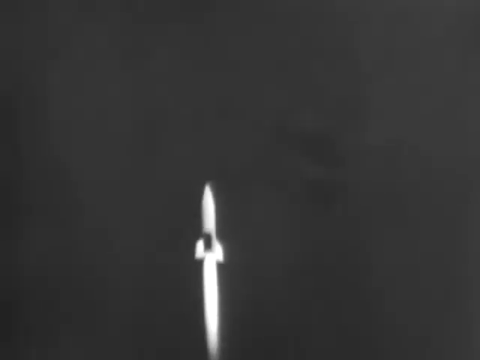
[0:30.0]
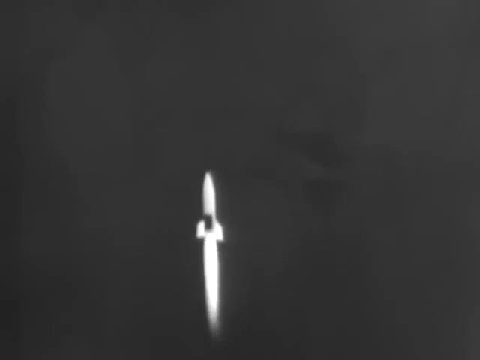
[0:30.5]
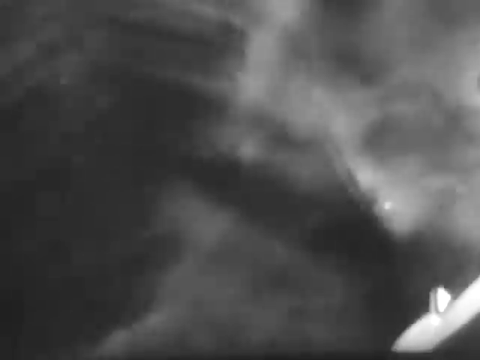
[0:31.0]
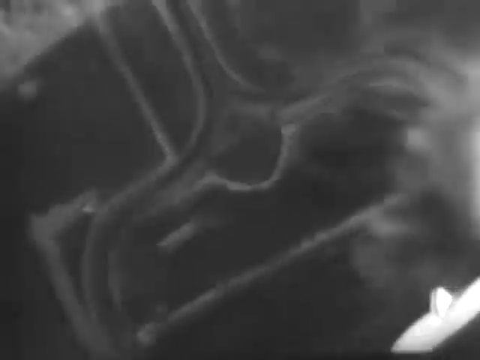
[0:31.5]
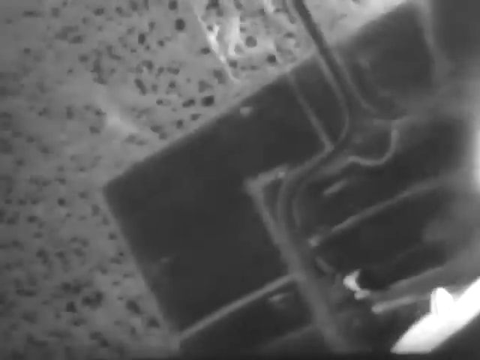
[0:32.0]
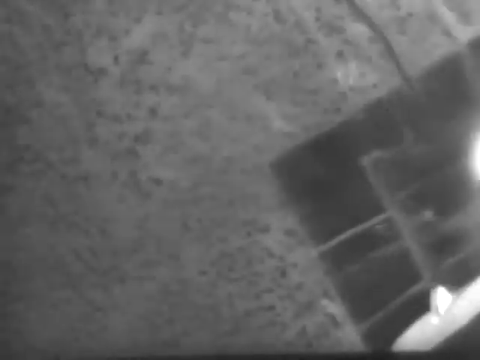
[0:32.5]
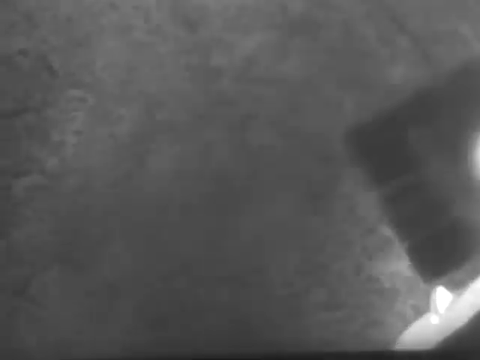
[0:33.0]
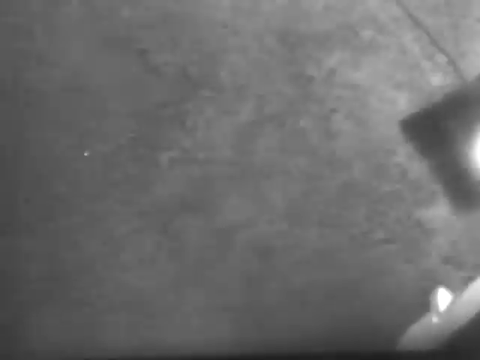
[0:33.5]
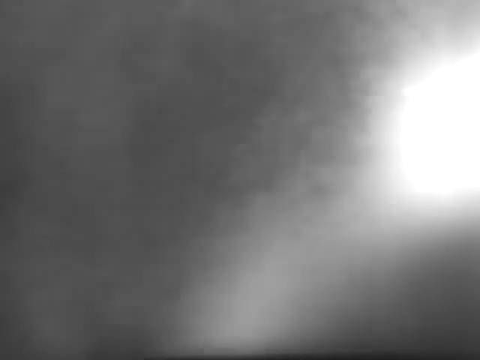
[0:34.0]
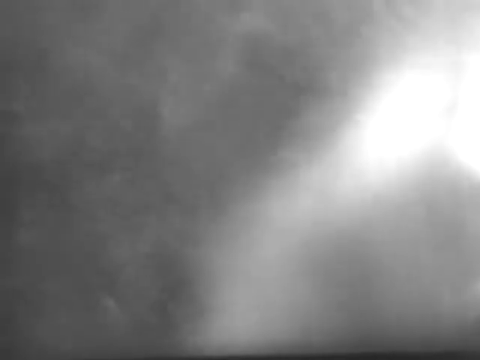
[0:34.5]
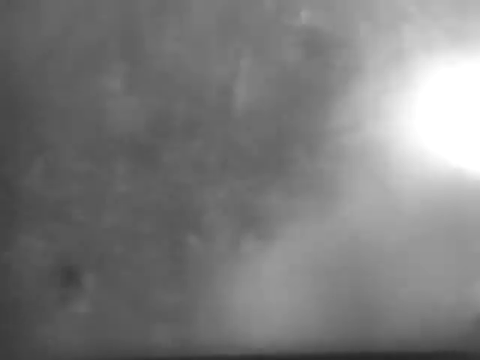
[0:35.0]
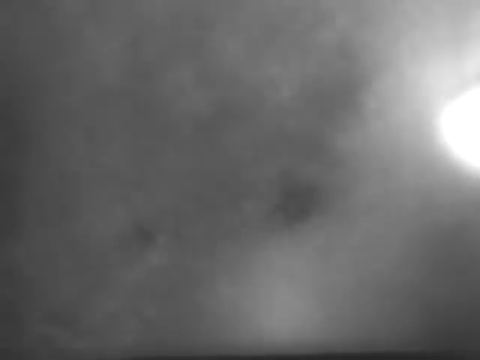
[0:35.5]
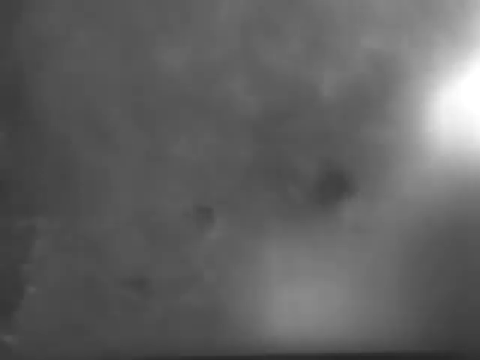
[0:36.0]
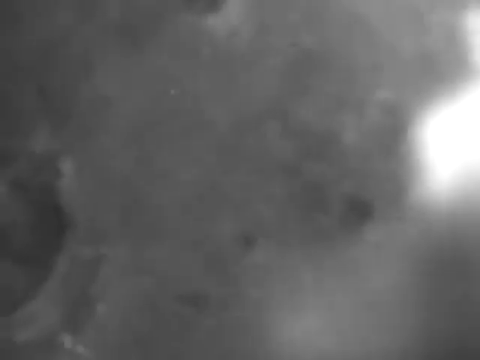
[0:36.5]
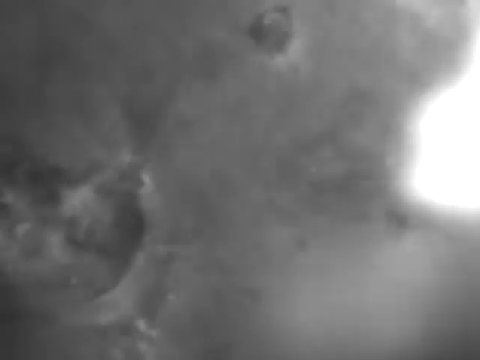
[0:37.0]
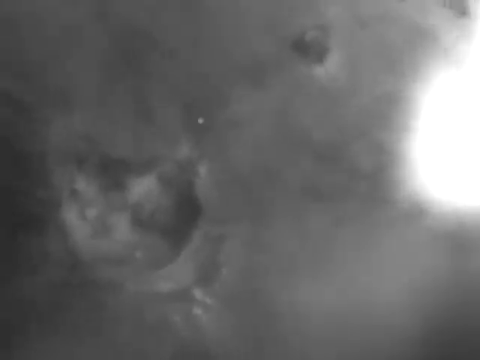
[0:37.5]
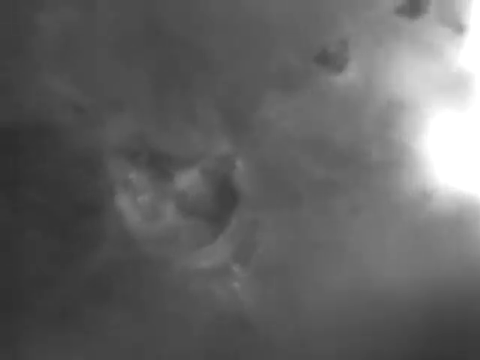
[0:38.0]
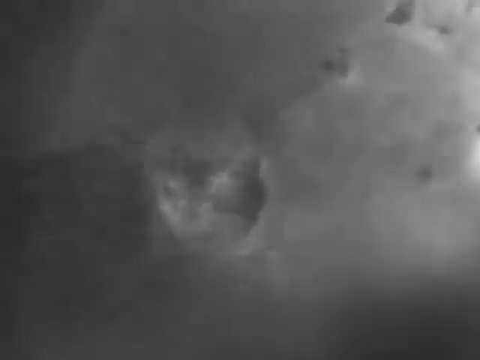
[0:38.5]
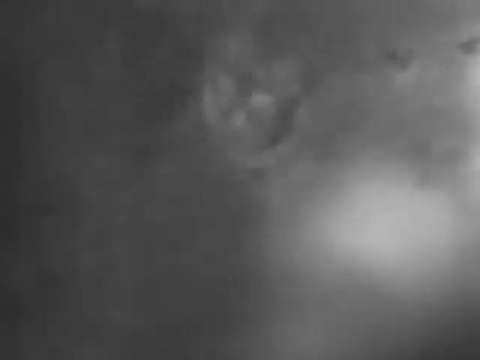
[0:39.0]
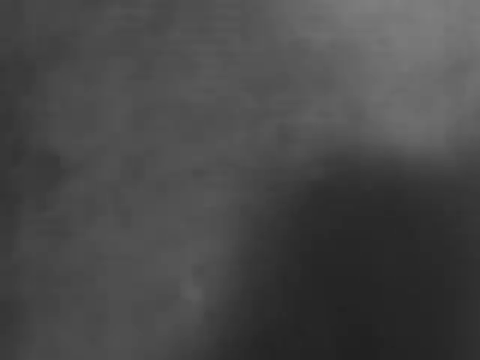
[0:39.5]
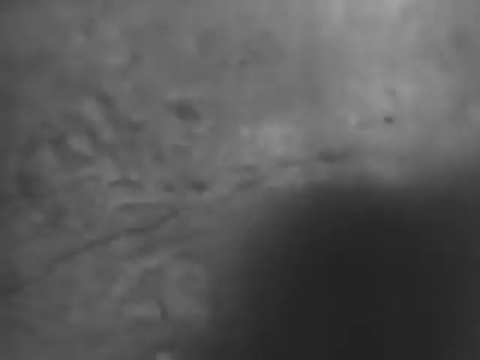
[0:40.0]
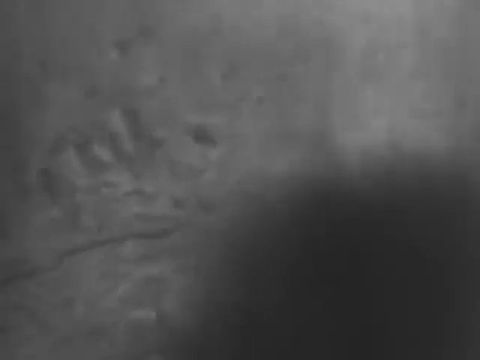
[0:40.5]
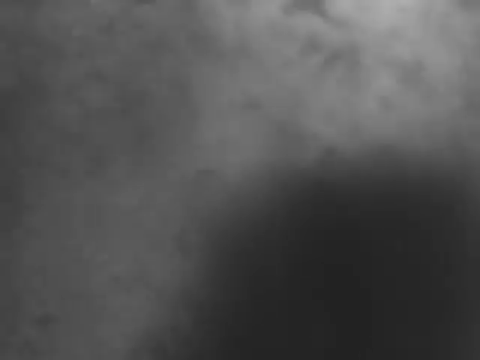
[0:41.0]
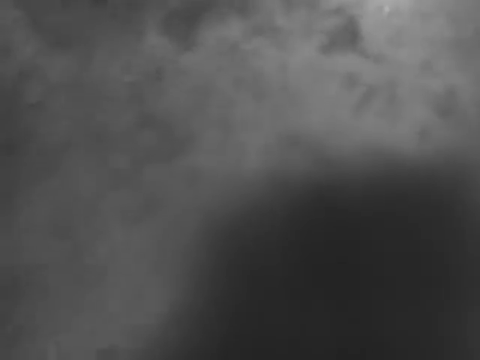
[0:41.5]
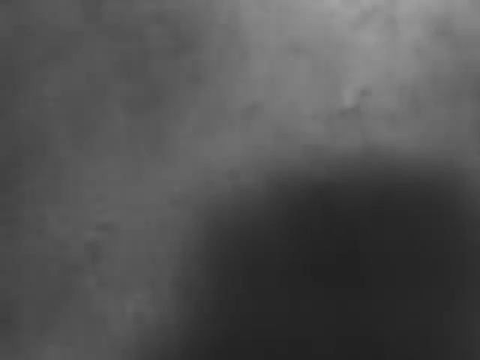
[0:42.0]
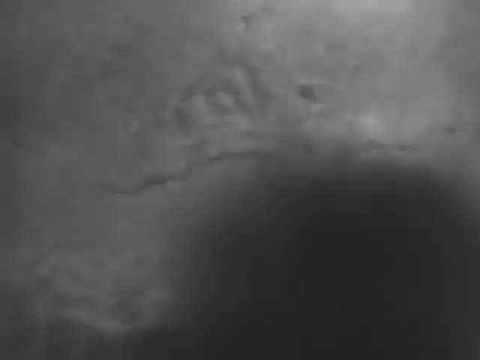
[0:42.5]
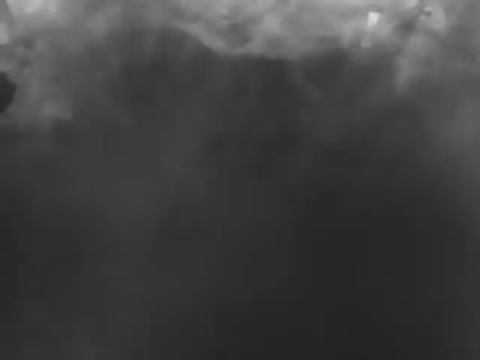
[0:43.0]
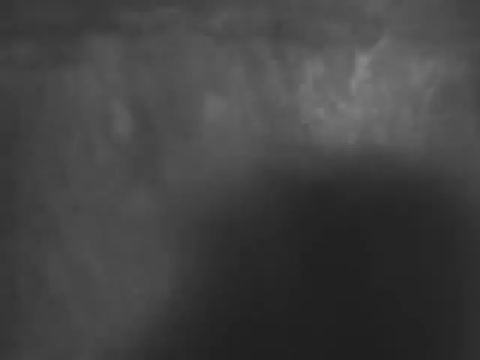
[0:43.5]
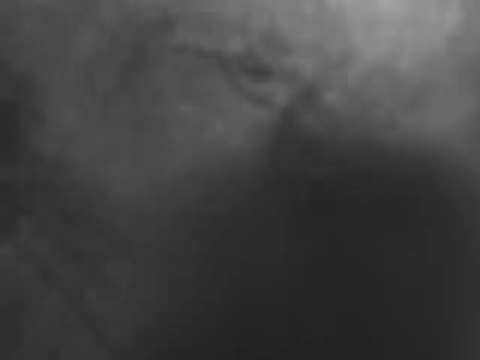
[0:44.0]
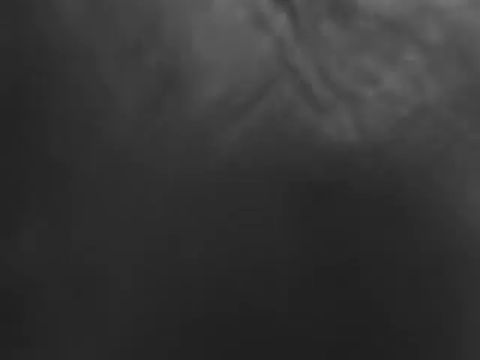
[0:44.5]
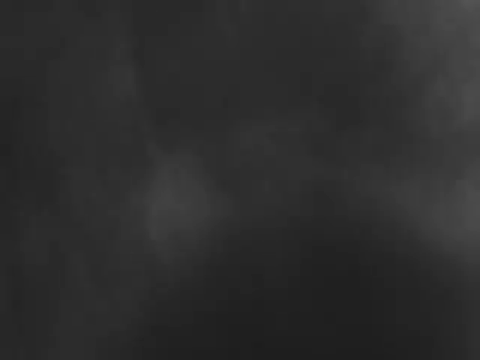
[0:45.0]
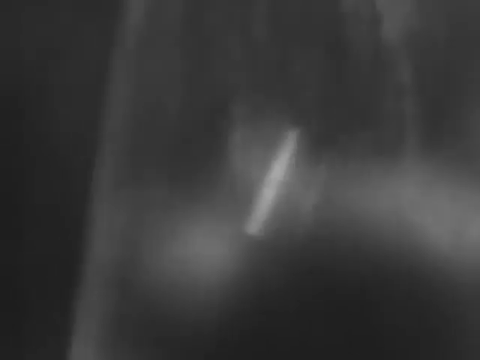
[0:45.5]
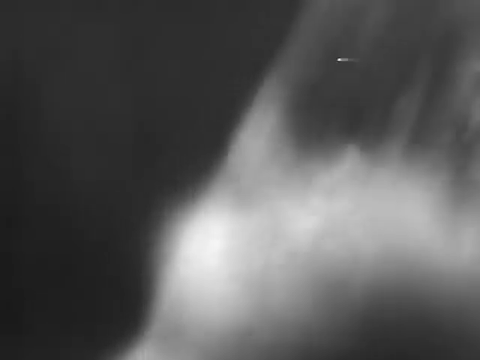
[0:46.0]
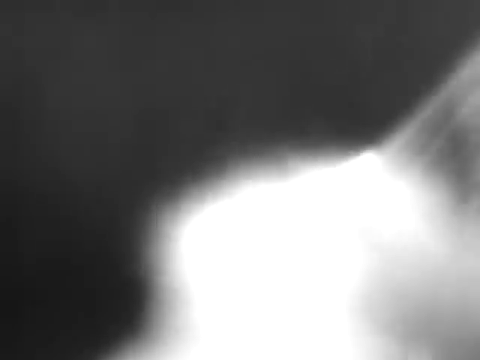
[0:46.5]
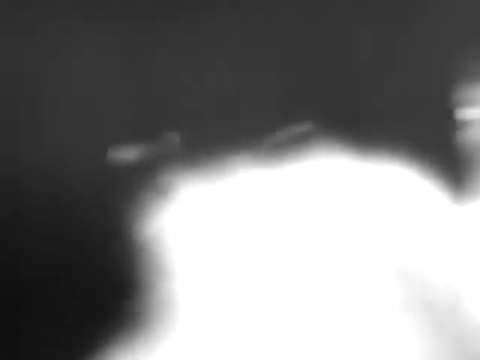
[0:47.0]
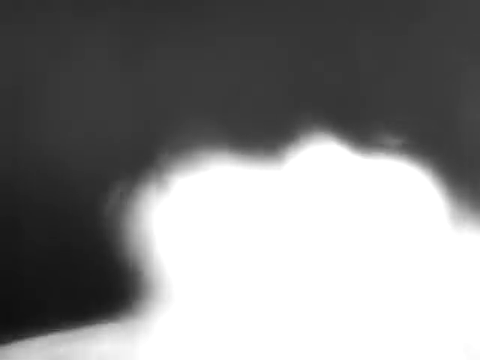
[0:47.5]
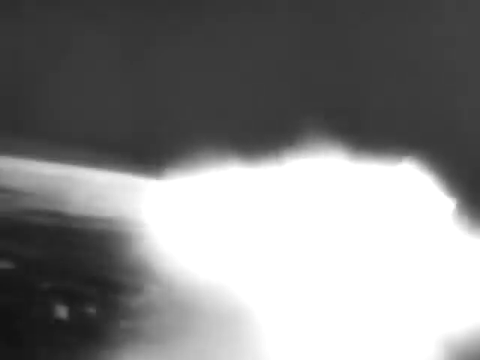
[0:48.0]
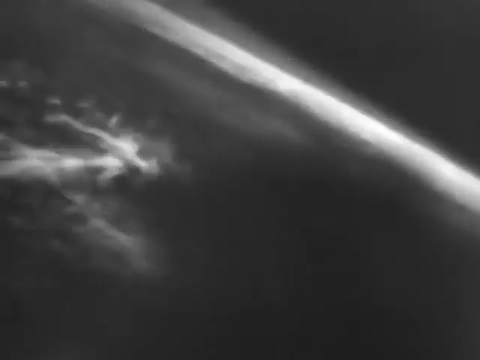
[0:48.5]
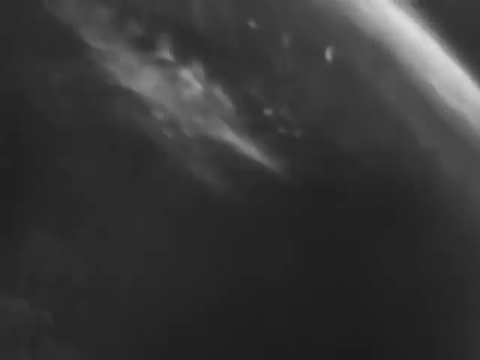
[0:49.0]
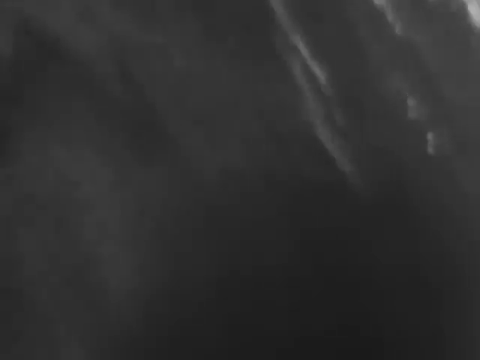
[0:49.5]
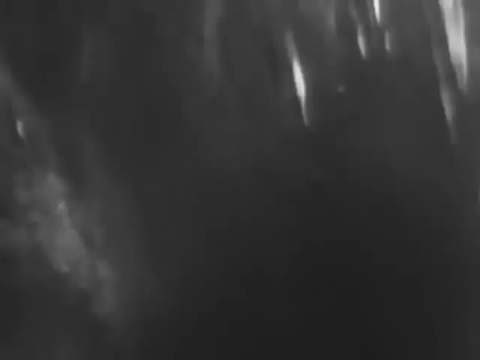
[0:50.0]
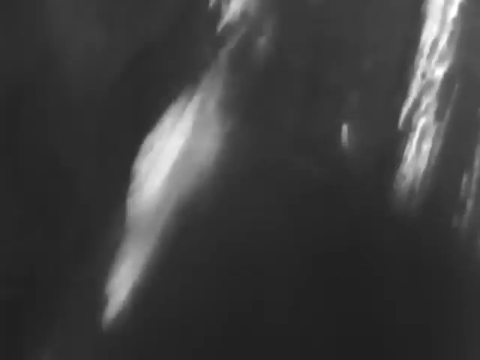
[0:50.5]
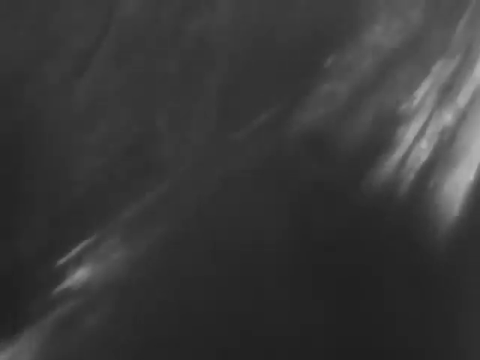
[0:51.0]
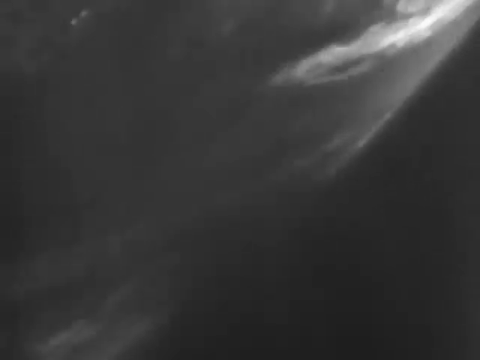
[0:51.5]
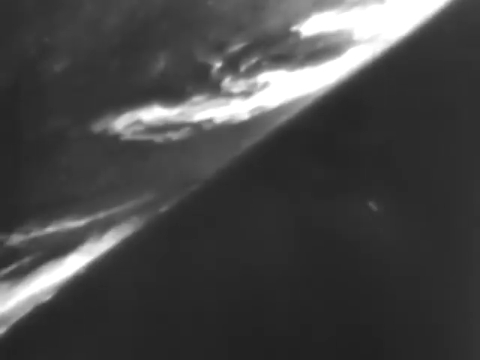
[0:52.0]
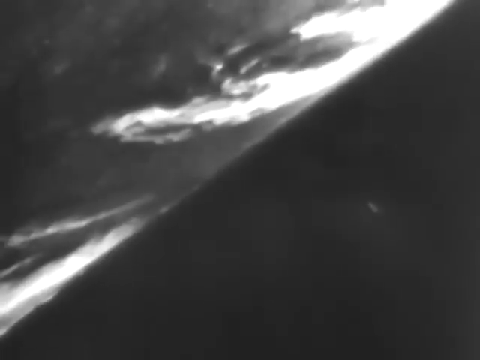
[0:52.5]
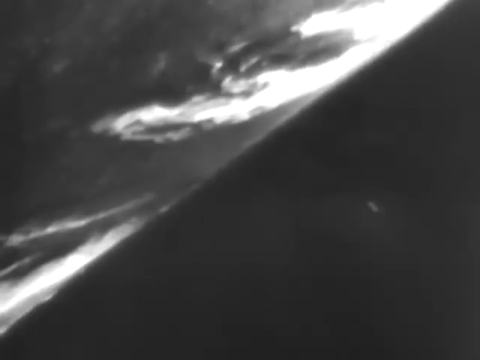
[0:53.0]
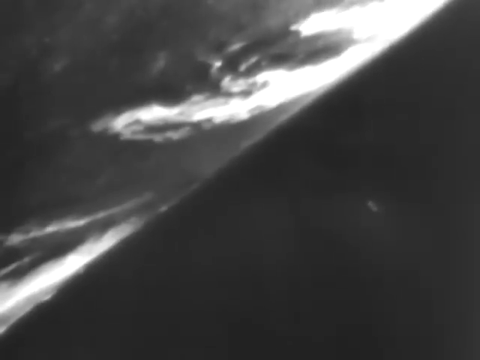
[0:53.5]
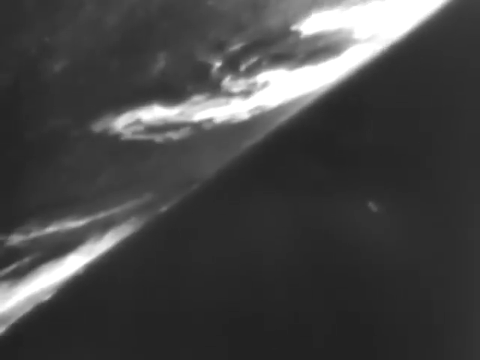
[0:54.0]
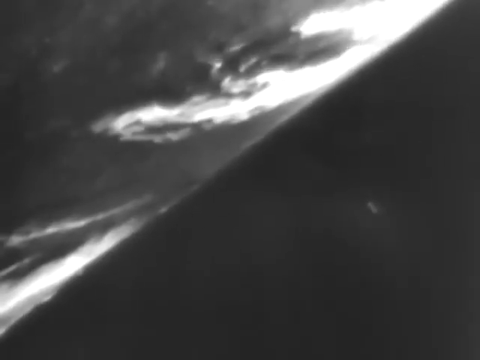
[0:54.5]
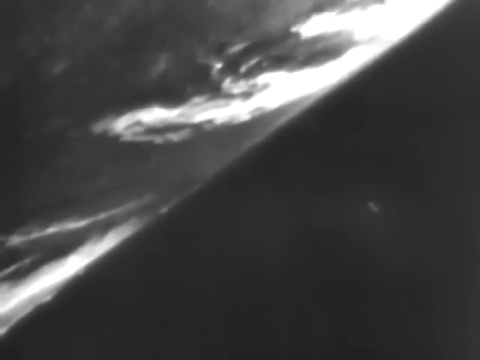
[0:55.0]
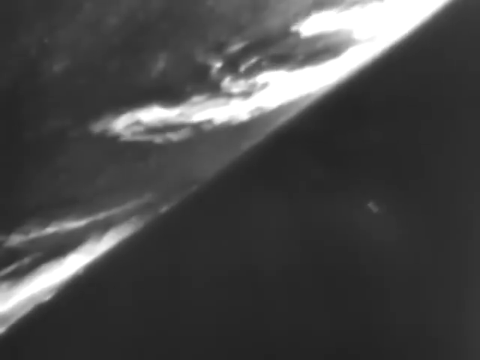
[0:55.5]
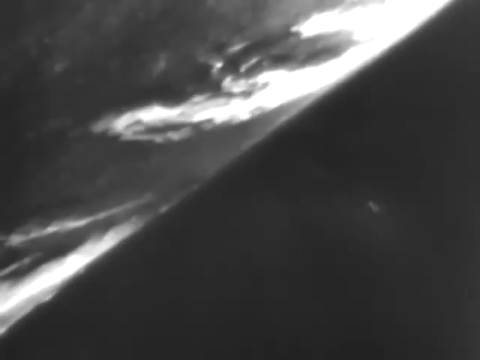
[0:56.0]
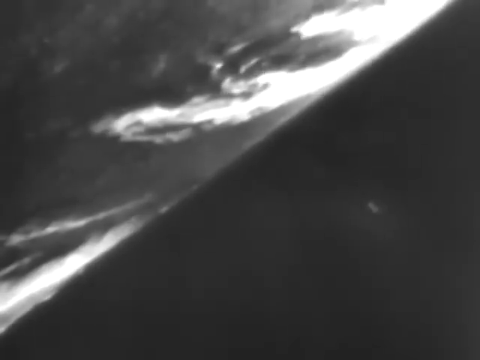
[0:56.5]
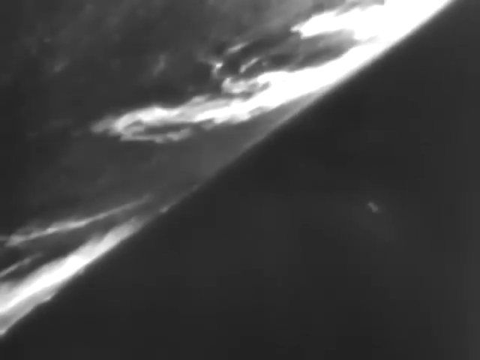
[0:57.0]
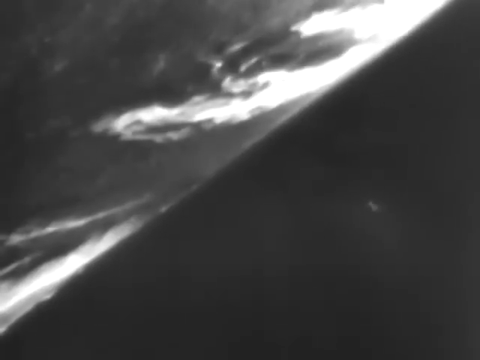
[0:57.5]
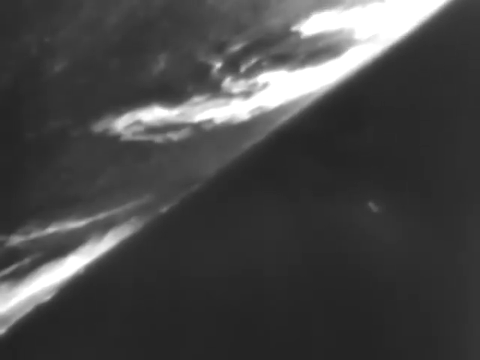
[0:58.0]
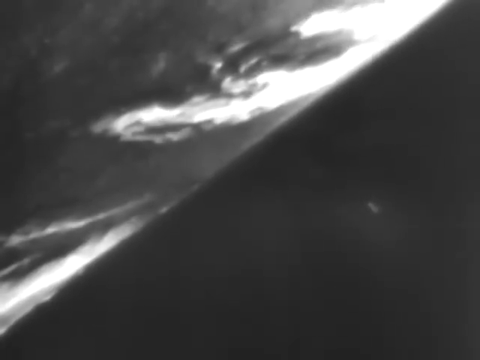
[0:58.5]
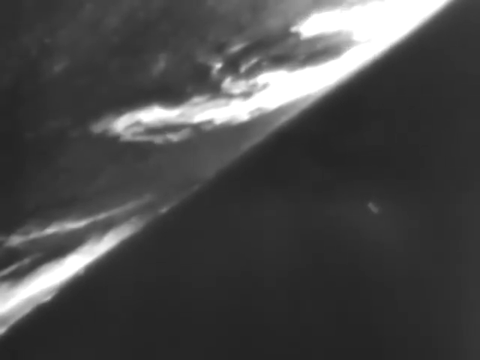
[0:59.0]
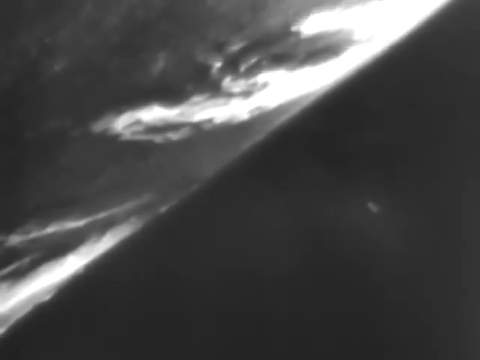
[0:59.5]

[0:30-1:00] A white rocket ship is shot up into the sky, with flames visible at the back end from the thrusters as it climbs higher and higher. A different aerial view shows it in the sky with a lot of smoke from the thrusters. The footage is a little blurry. The rocket then reaches space, with the Earth in view, and it hangs there, seen as kind of a little blip.